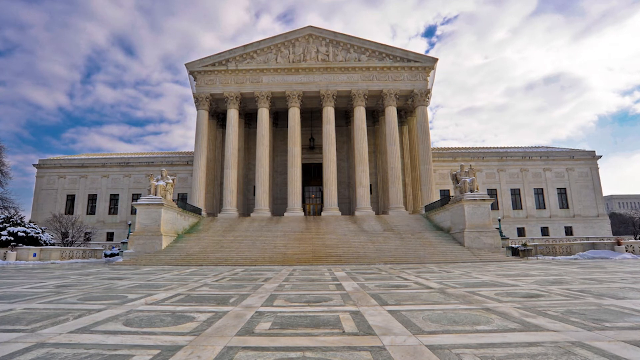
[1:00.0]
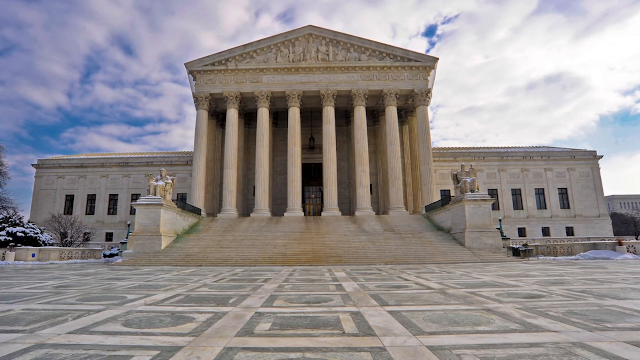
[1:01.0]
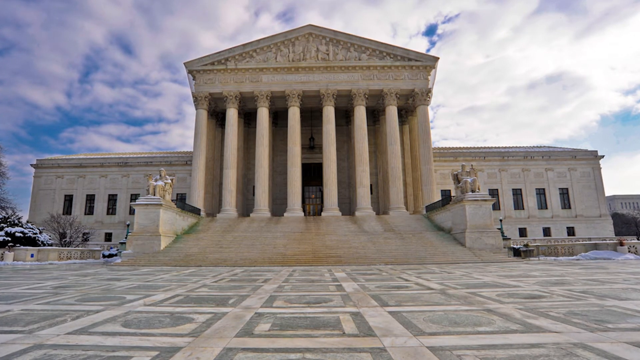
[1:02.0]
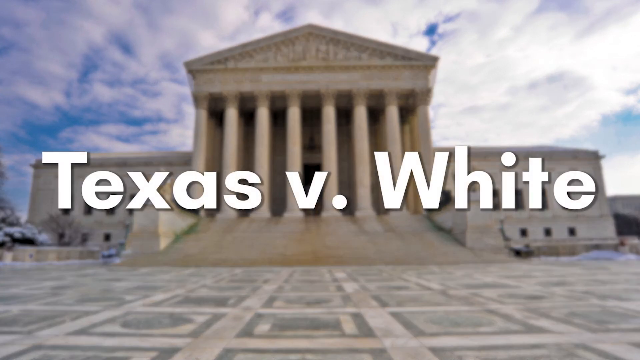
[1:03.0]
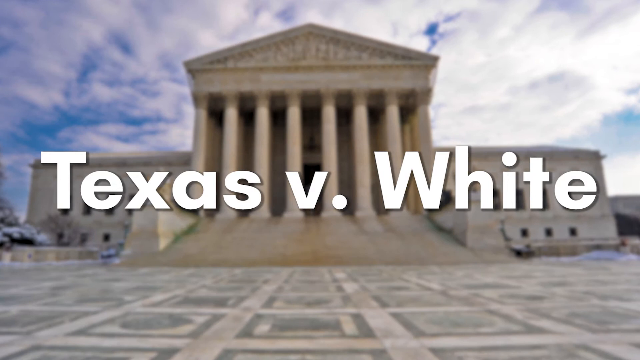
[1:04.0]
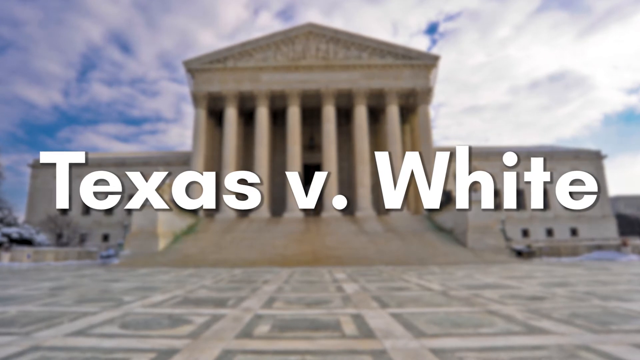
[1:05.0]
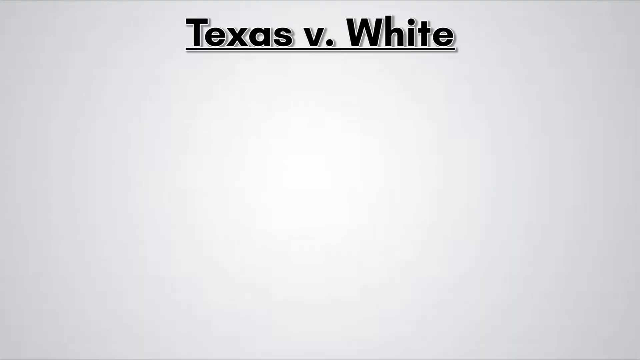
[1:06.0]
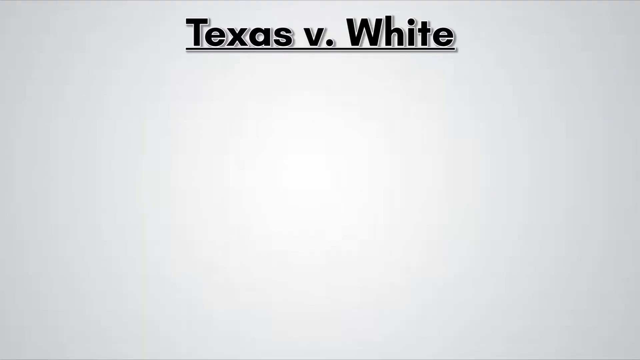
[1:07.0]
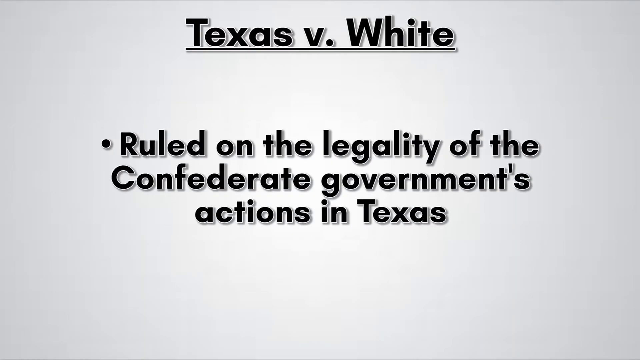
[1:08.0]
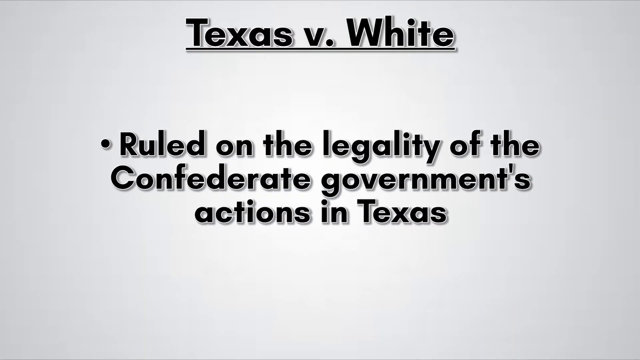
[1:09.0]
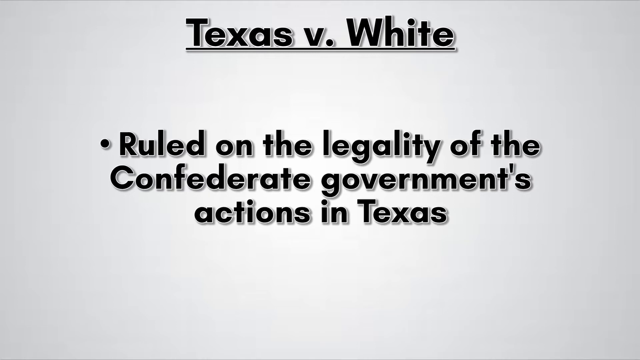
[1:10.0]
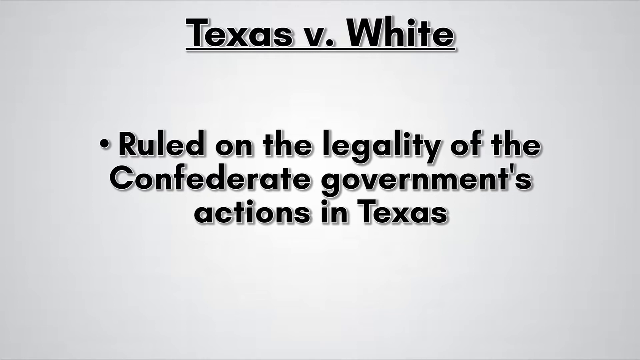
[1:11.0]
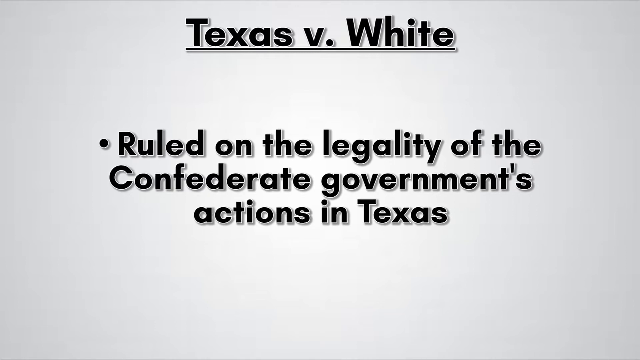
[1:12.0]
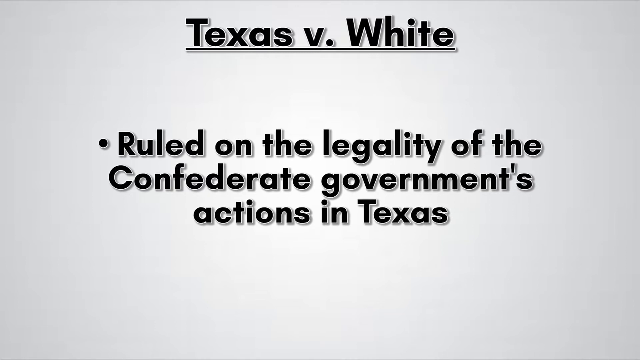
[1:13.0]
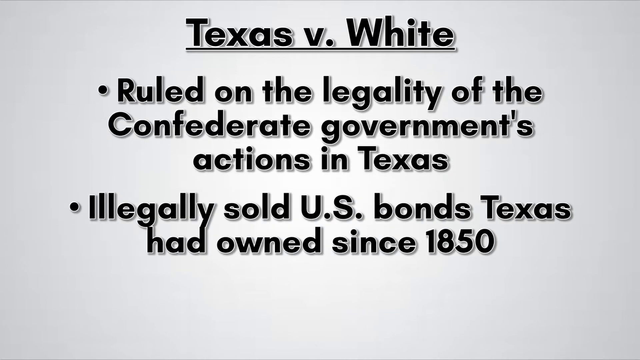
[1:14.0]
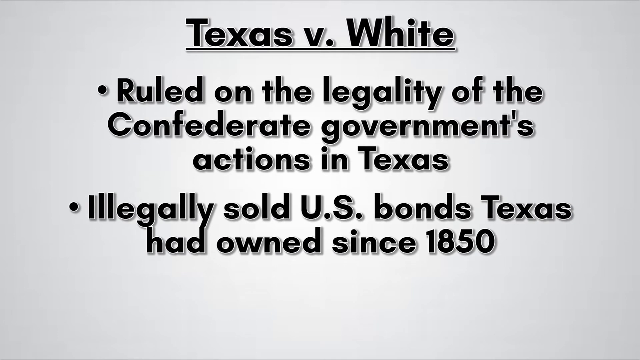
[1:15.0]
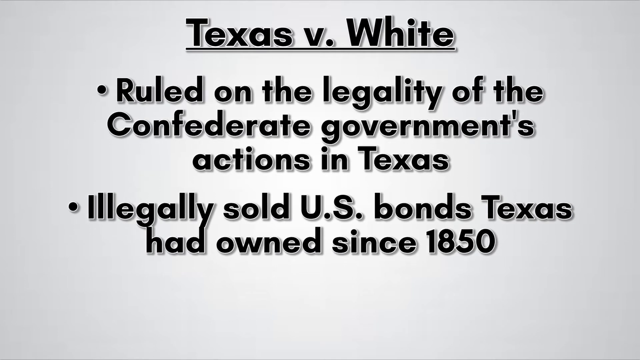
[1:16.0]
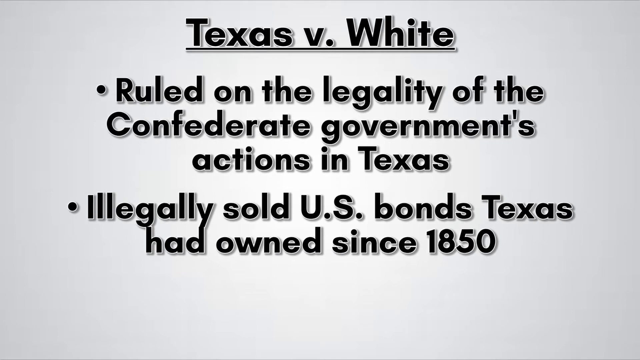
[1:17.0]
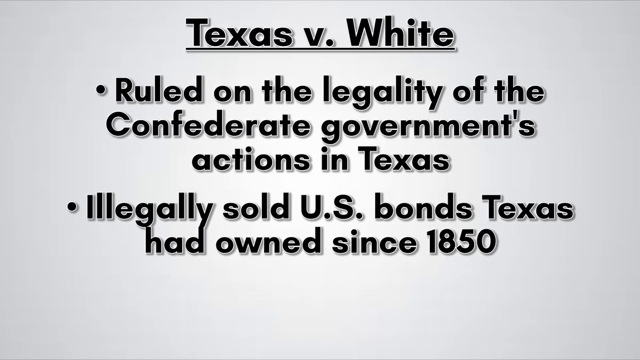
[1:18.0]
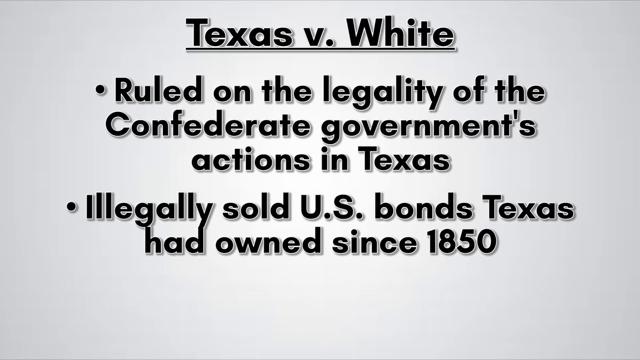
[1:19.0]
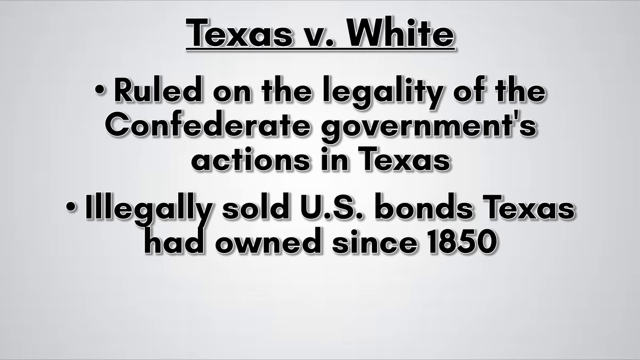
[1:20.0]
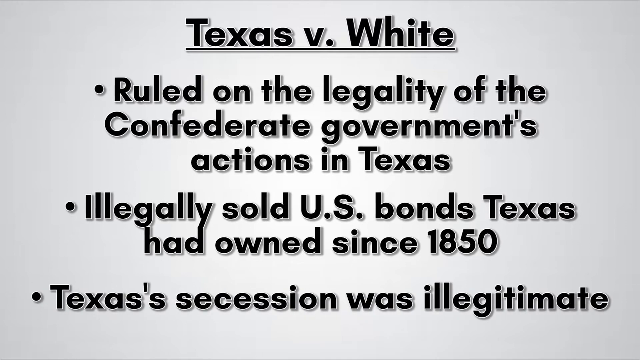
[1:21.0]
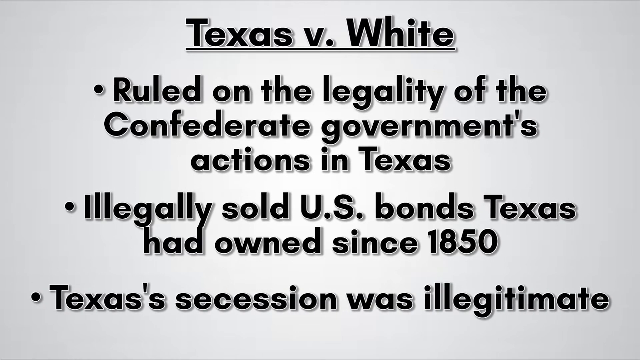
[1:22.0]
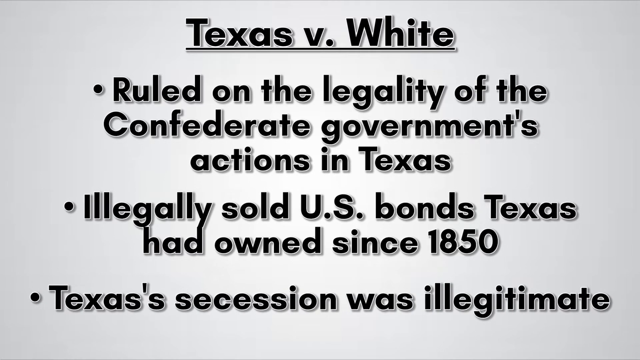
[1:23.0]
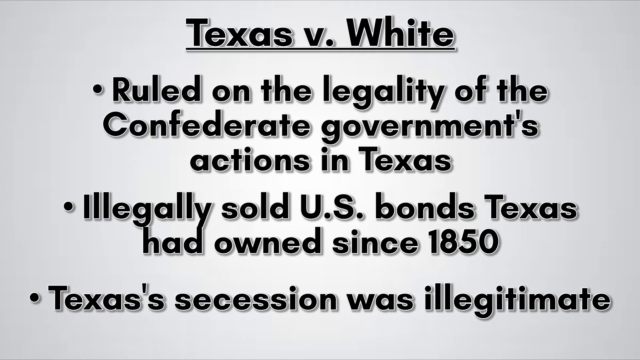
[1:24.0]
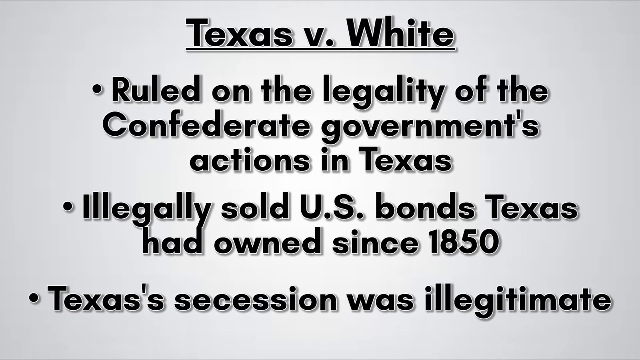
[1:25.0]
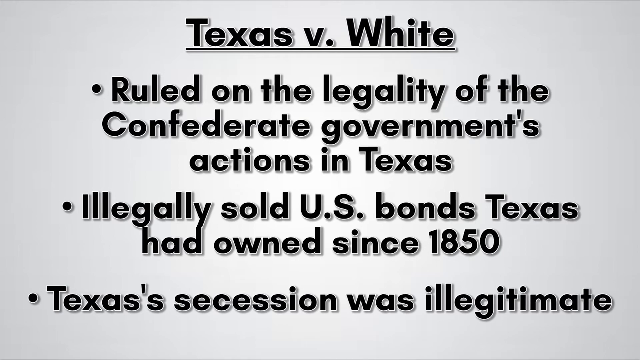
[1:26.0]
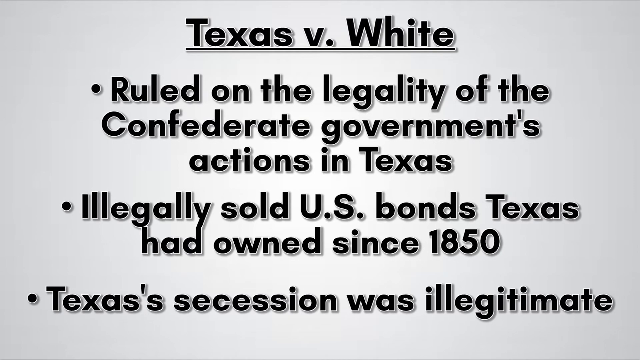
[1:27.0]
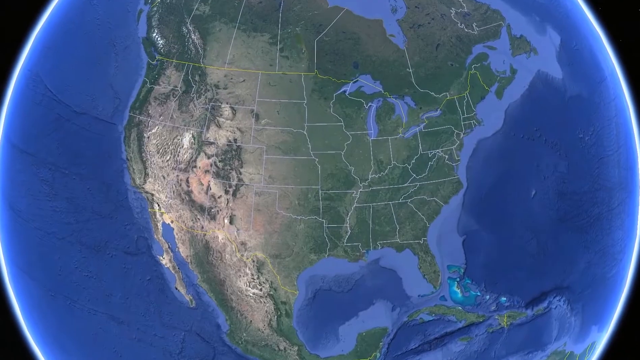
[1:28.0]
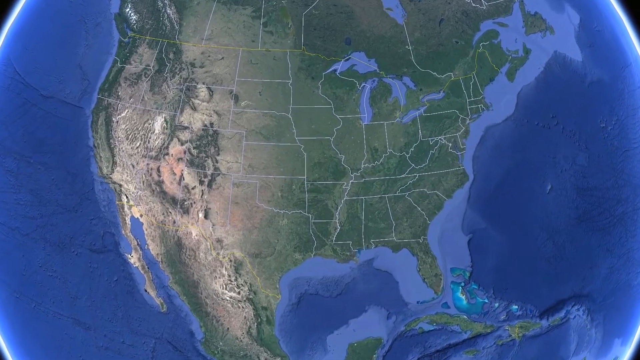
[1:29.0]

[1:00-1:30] The scene opens on what looks like a constitutional building. White letters then read "Texas versus white," which appears to be a court case. "Texas versus white" then appears in black letters on a white background. Black text also reads "illegally sold U.S. bonds Texas had owned since 1850" and "Texas secession was illegitimate." The video then returns to the United States of America and begins to zoom in a little closer. This time the map is clear, with no states colored in. The water of the oceans bordering the United States is visible as it zooms in, along with mountain terrain outlines and no visible state lines.